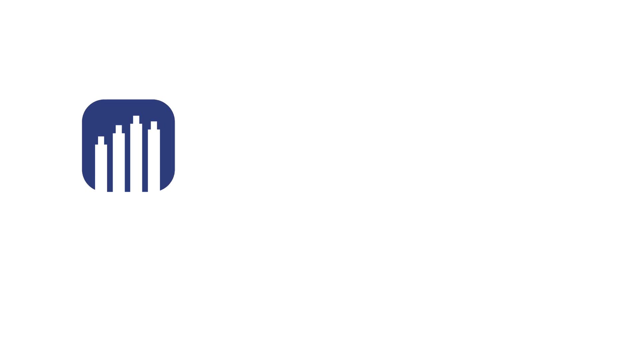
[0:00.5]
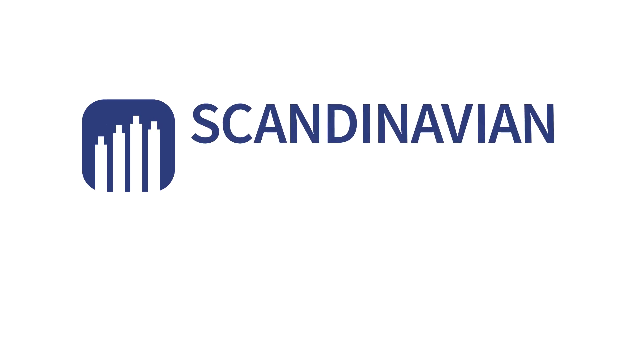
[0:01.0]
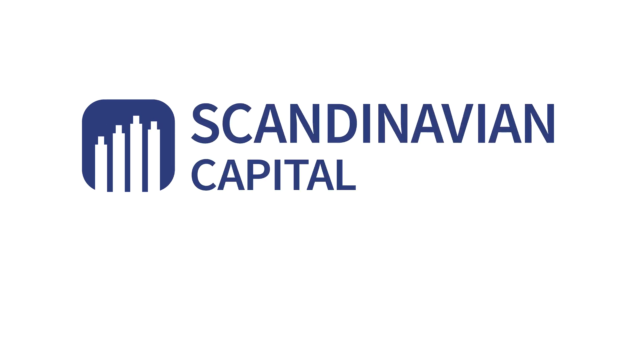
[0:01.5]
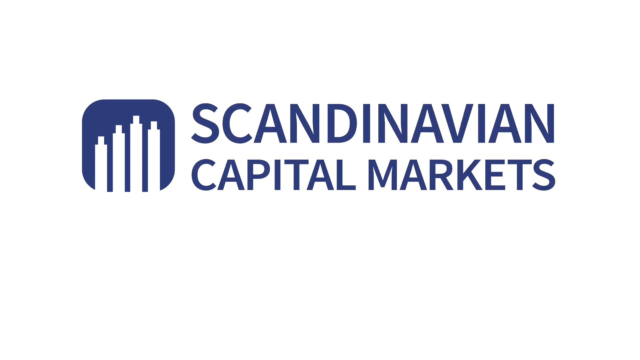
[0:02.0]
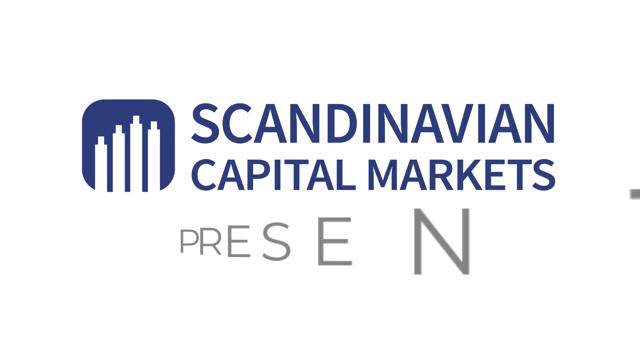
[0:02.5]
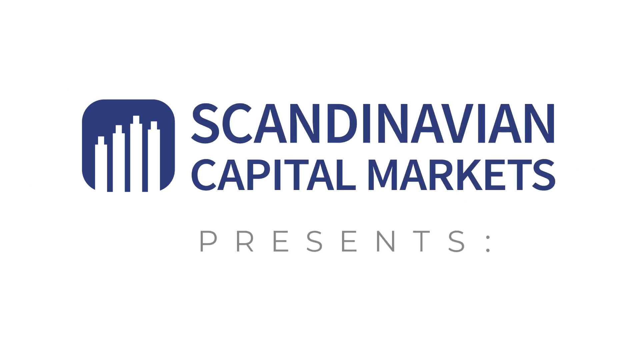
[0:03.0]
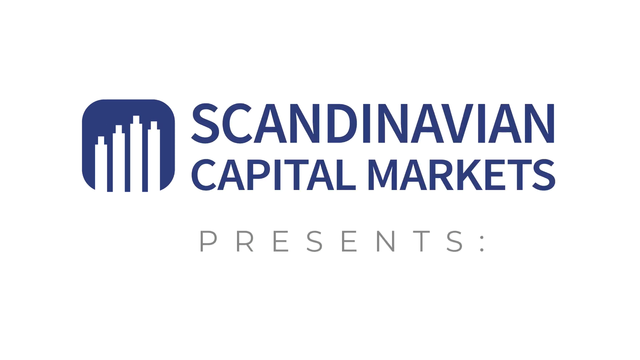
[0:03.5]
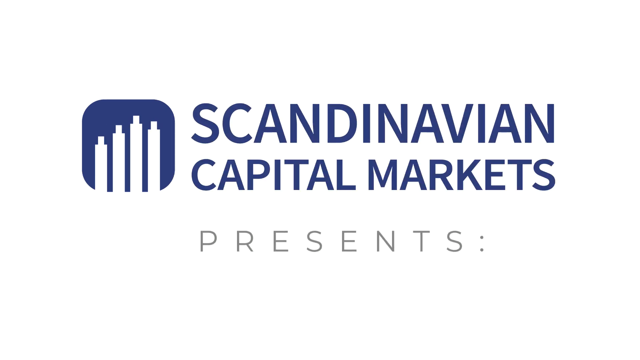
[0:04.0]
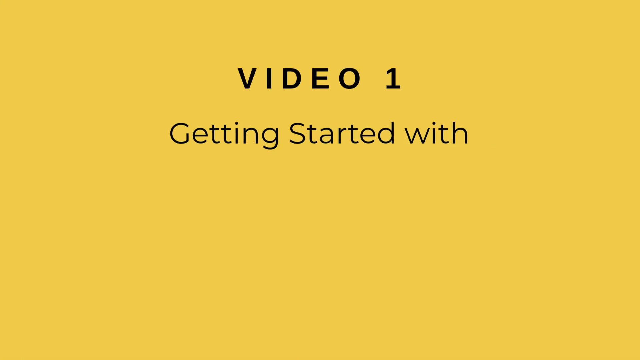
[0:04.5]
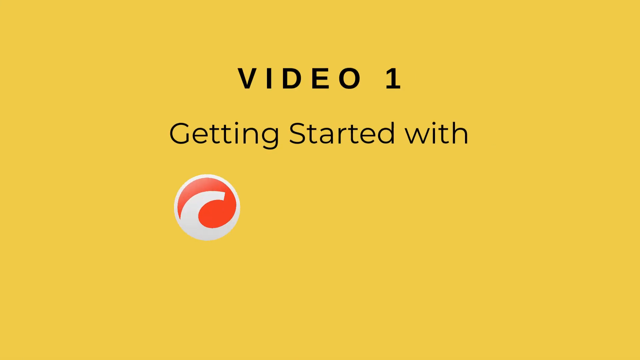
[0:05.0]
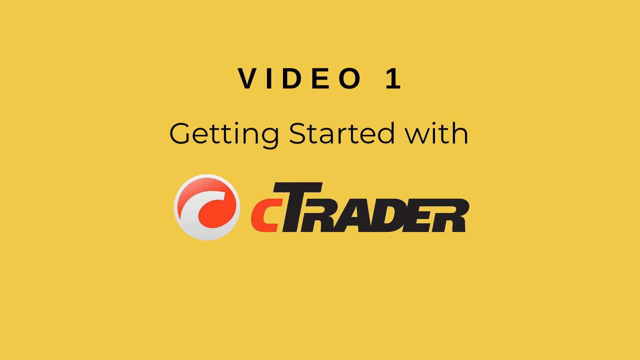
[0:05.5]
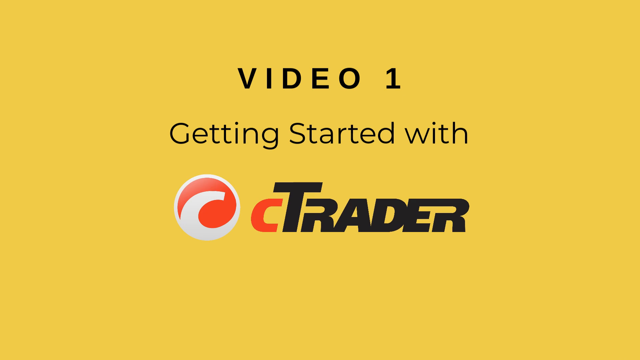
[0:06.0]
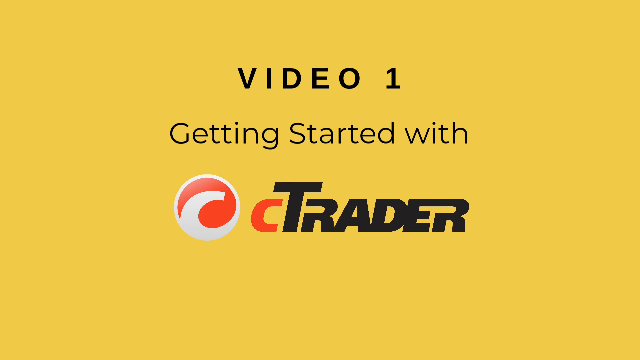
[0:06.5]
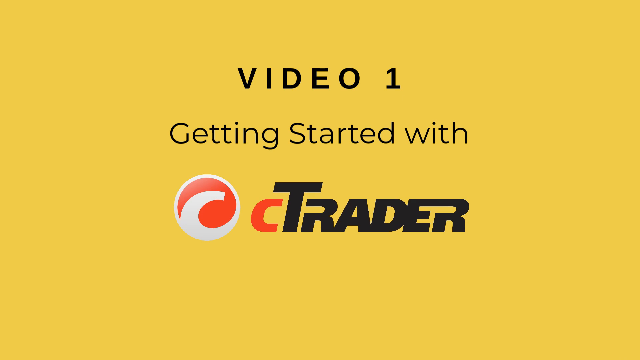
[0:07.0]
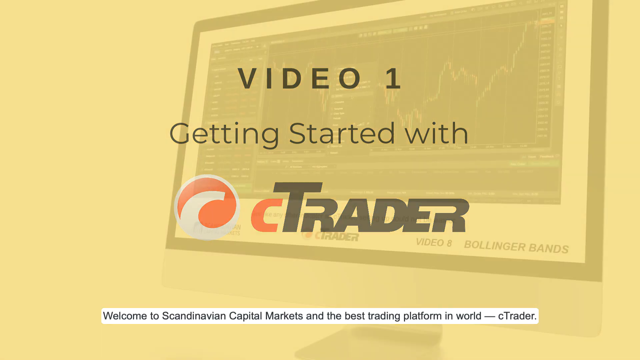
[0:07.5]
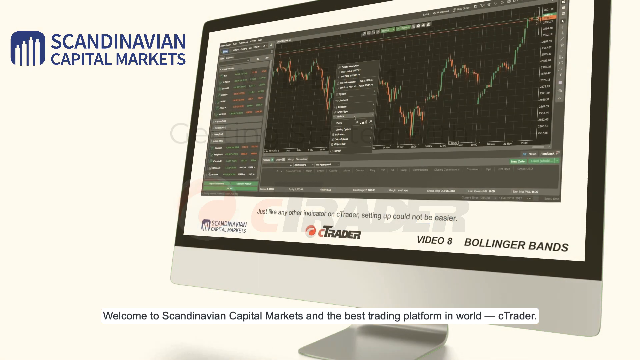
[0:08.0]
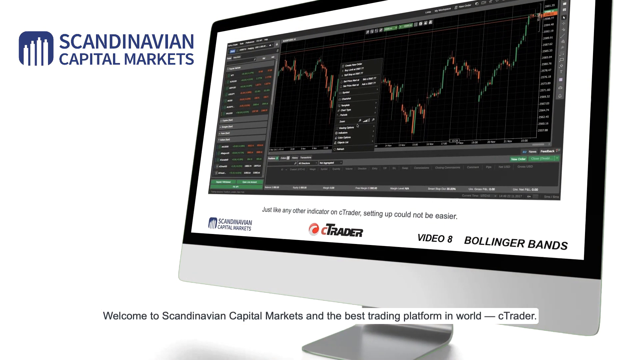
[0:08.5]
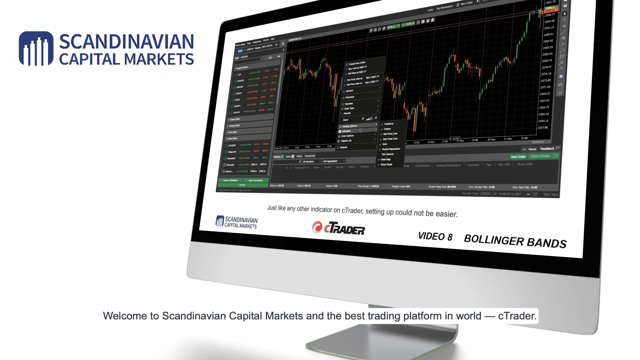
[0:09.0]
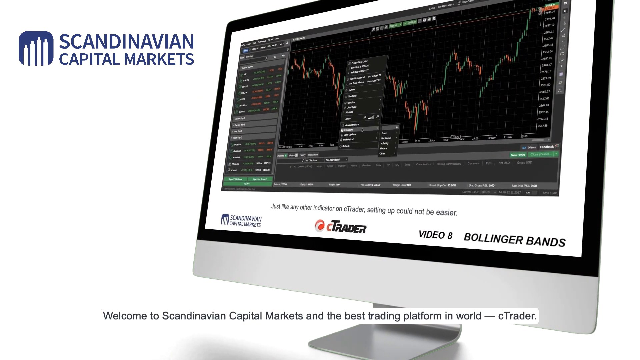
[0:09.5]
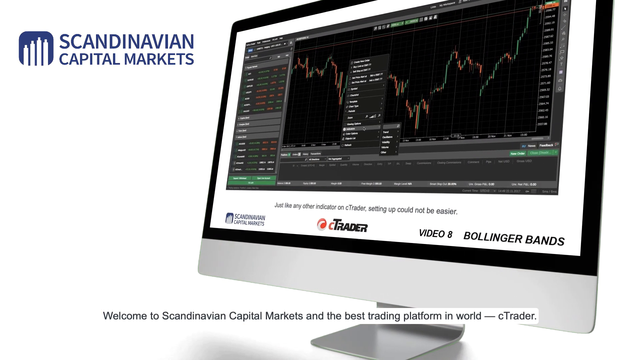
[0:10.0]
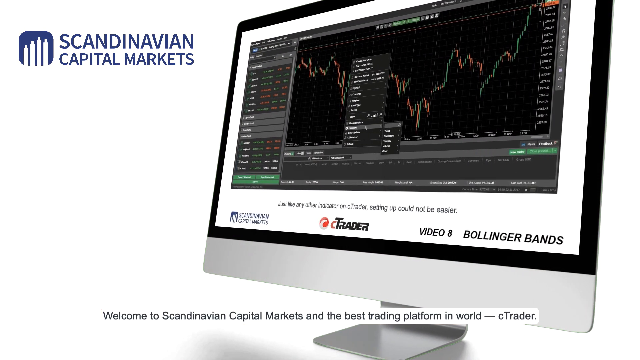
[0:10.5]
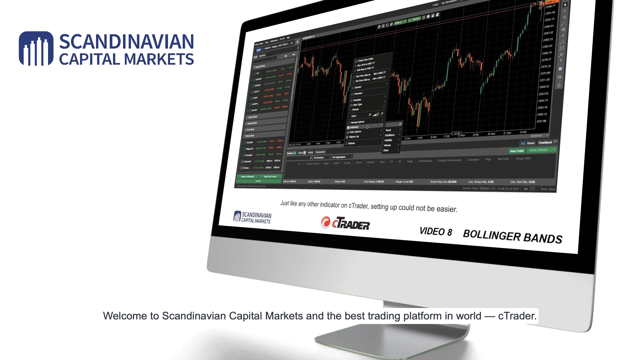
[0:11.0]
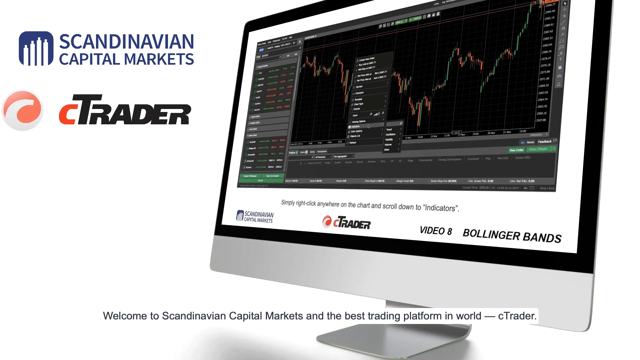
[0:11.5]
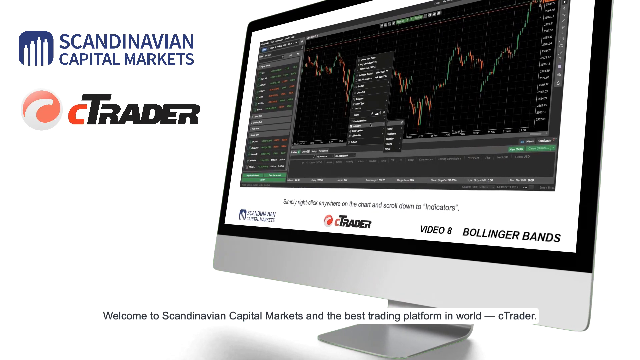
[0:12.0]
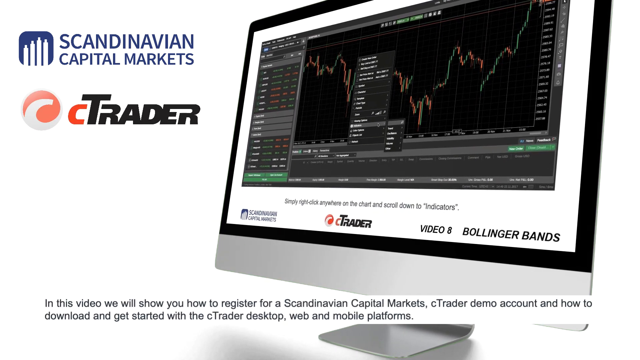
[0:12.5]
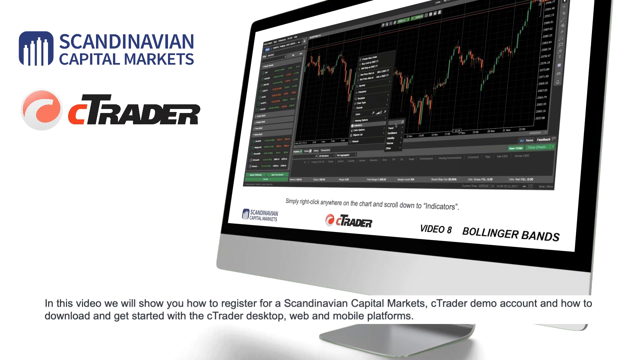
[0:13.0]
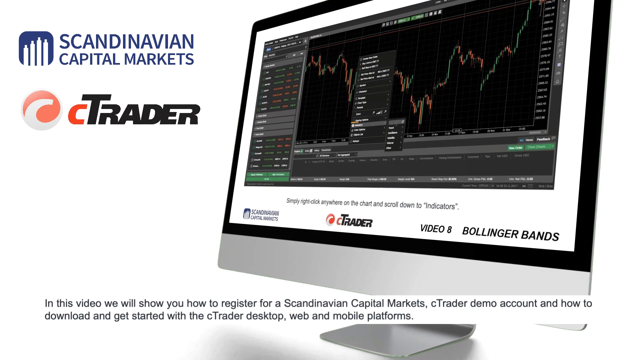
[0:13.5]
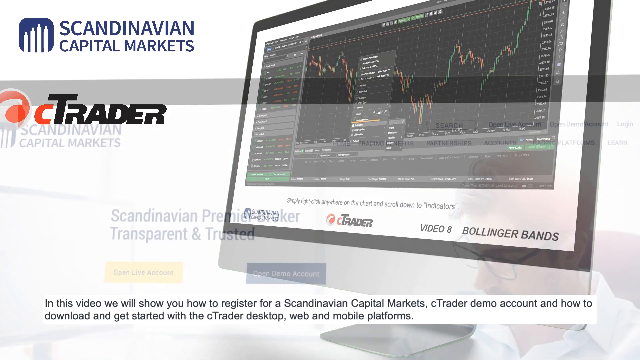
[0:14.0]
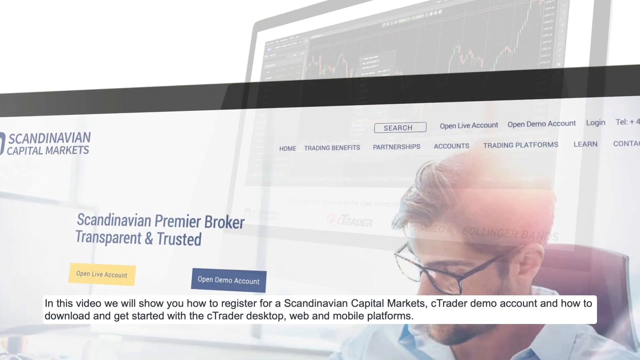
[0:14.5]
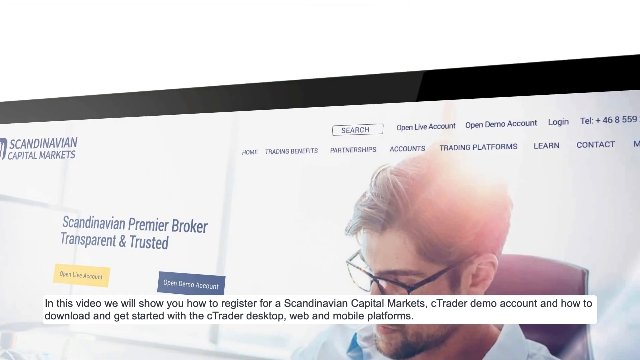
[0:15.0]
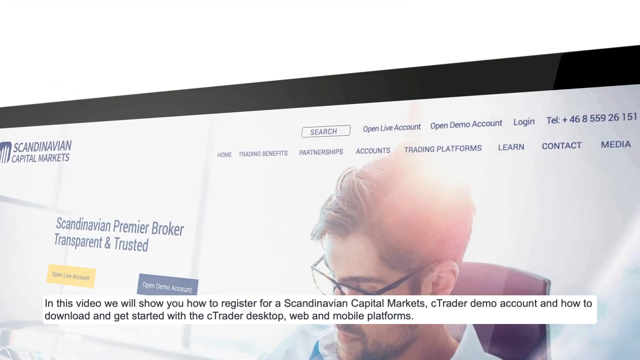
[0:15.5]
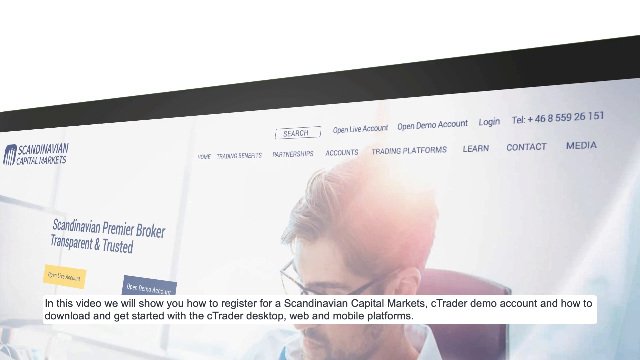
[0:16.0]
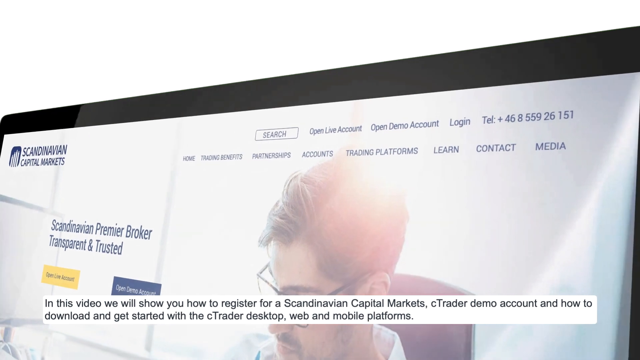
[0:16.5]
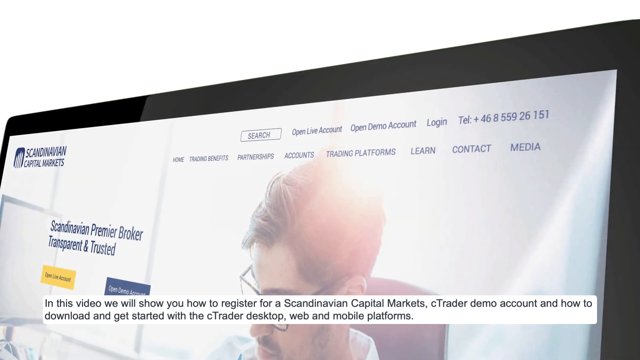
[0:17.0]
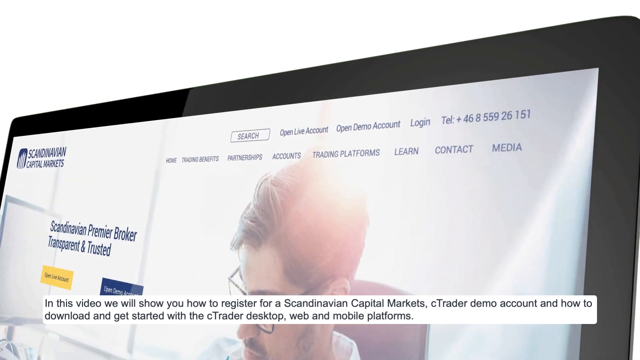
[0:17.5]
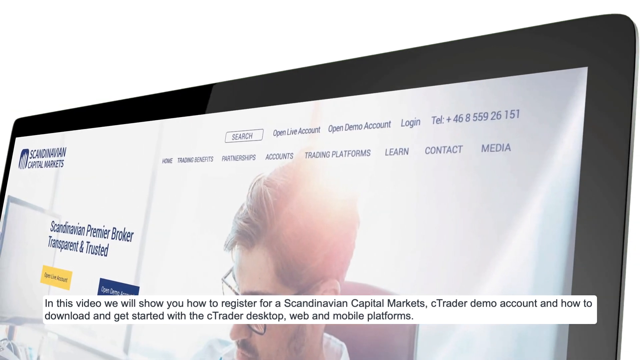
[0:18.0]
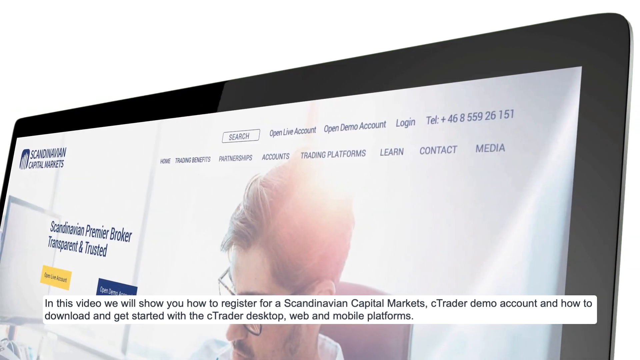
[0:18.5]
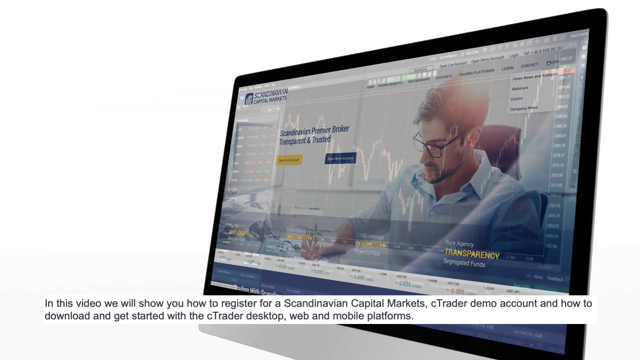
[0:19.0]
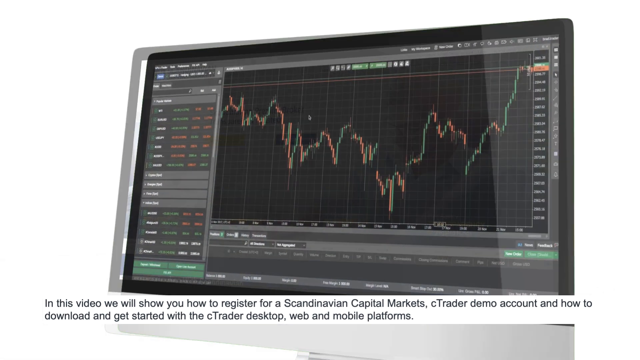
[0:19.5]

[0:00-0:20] A logo of four buildings in a blue square comes flying in from the left, spinning as it enters before coming to an abrupt stop in the center left of the screen. The word "Scandinavian" then pops up in the middle of the screen to the right of the logo; the logo and the lettering are both blue. The words "capital markets" pop in below "Scandinavian," also in blue, and the word "presents" pops in below "capital markets" in the center of the screen in gray. The title card changes to a yellow screen showing "Video 1, Getting Started with cTrader." The cTrader logo is orange and white with a C swirling out at the center, and all the other text is black. The screen fades to another screen with stock trading stats, with "Scandinavian capital markets" in the upper left corner and "cTrader" below that. The scene fades into a monitor showing their website and then fades back to show more stock trading.